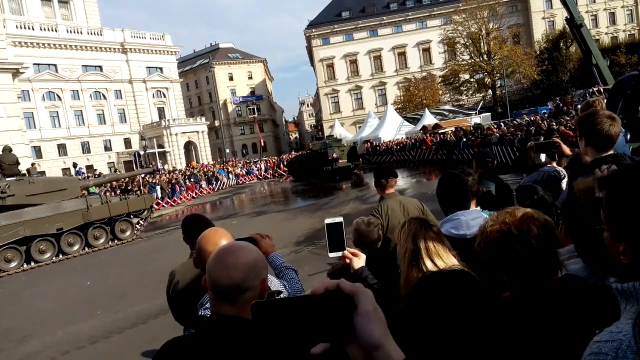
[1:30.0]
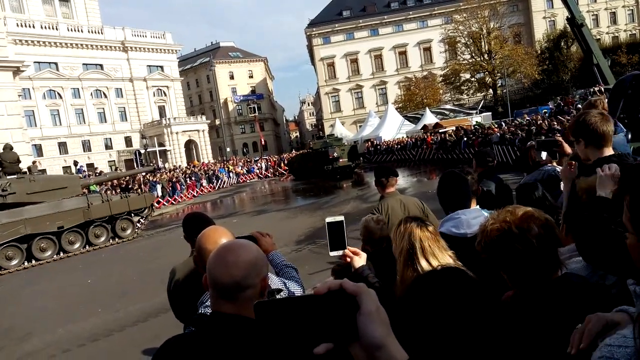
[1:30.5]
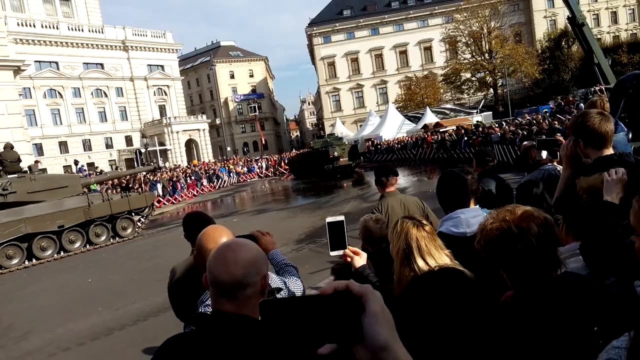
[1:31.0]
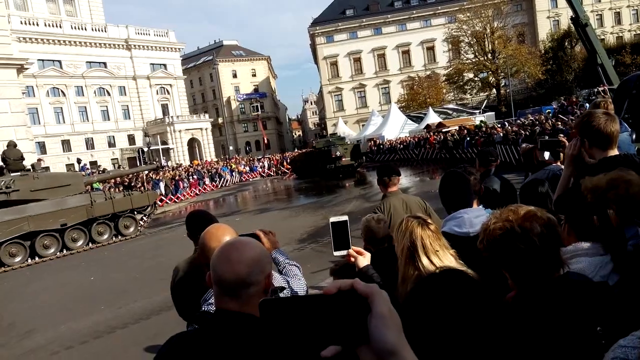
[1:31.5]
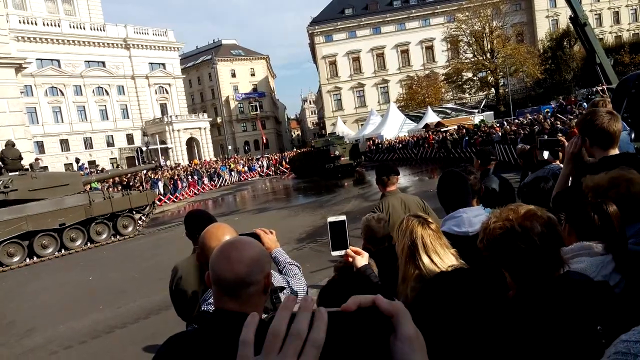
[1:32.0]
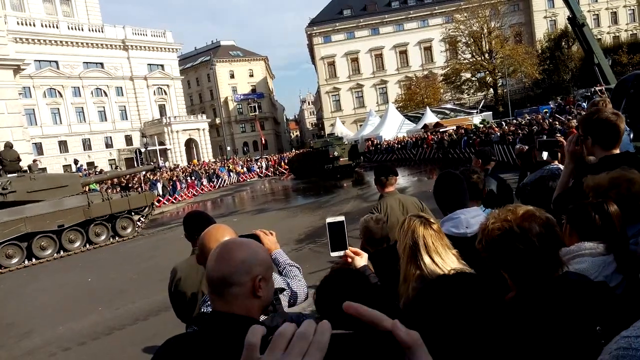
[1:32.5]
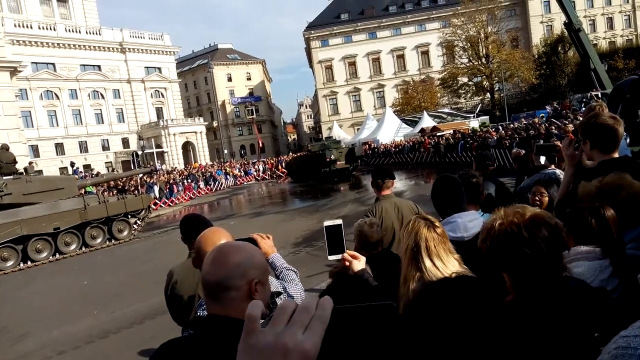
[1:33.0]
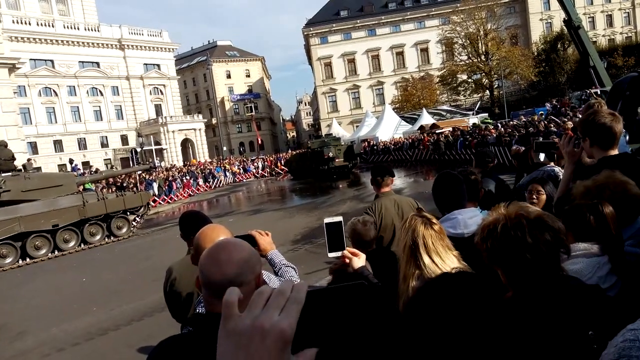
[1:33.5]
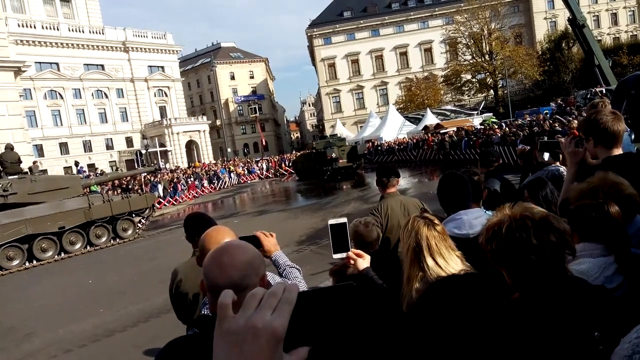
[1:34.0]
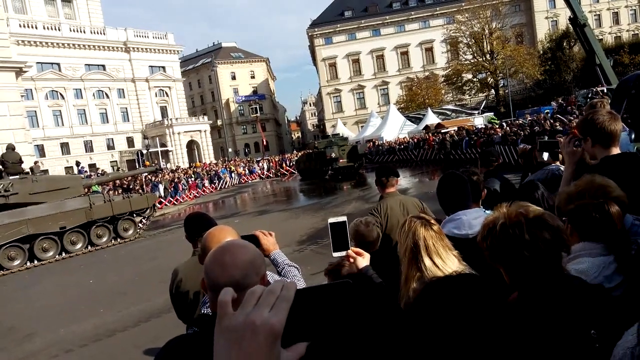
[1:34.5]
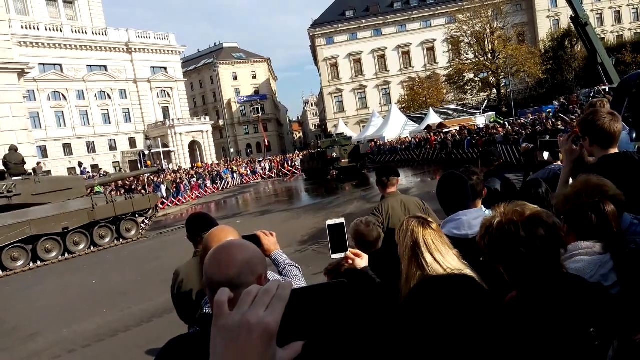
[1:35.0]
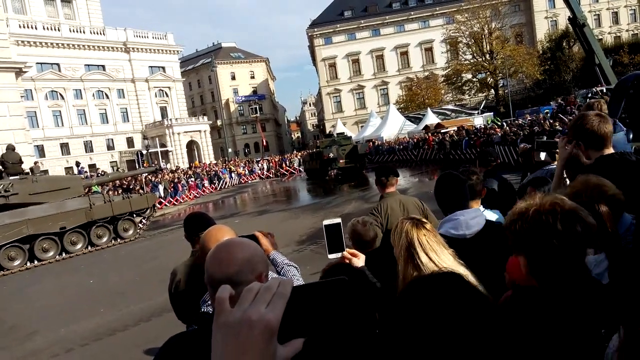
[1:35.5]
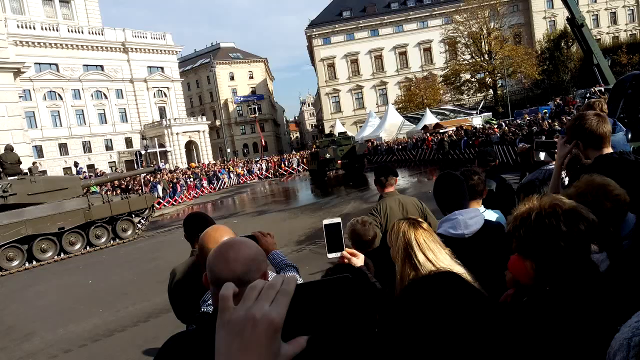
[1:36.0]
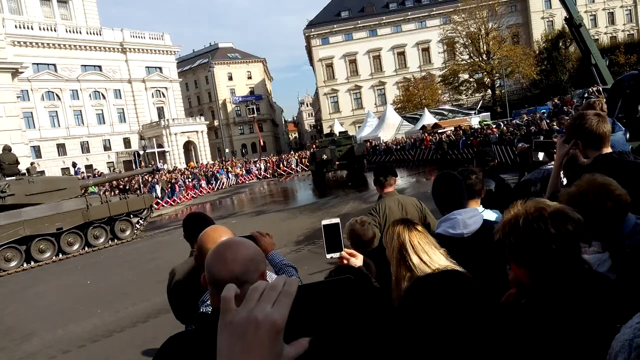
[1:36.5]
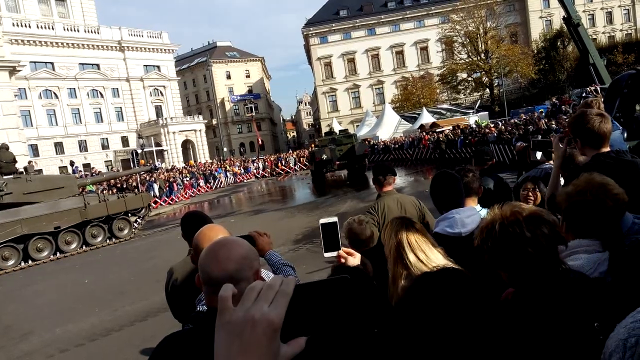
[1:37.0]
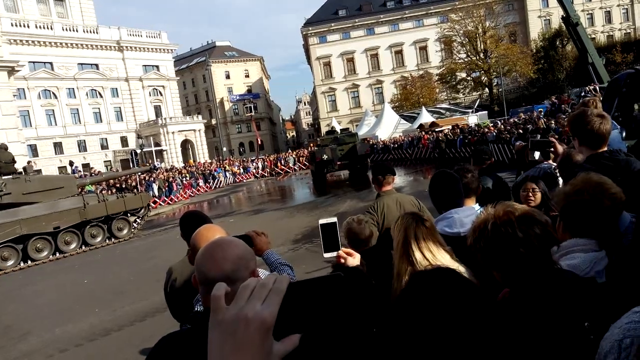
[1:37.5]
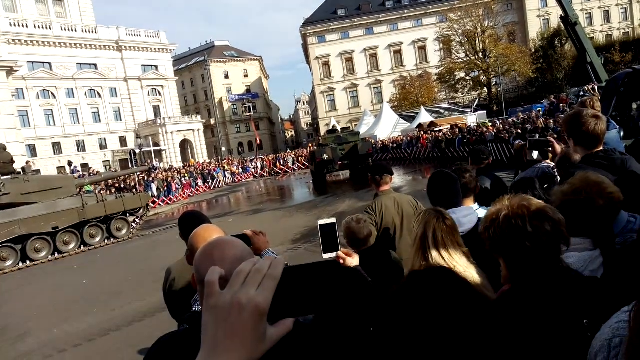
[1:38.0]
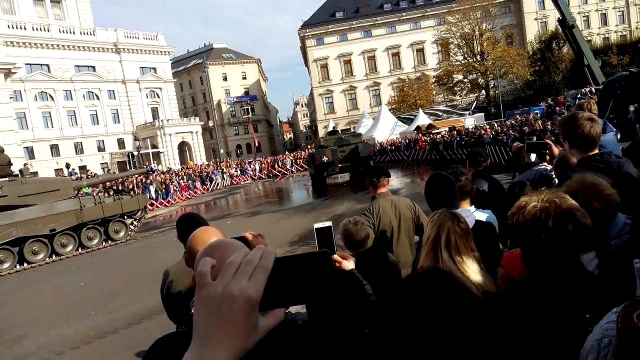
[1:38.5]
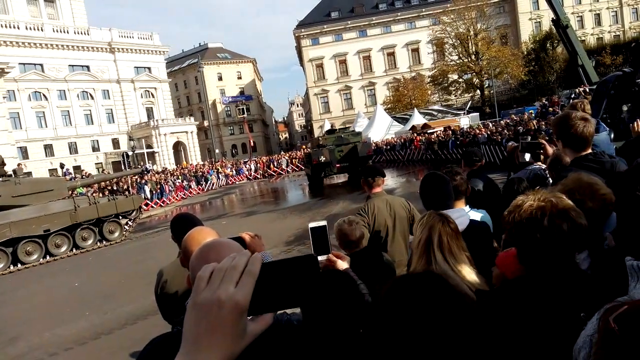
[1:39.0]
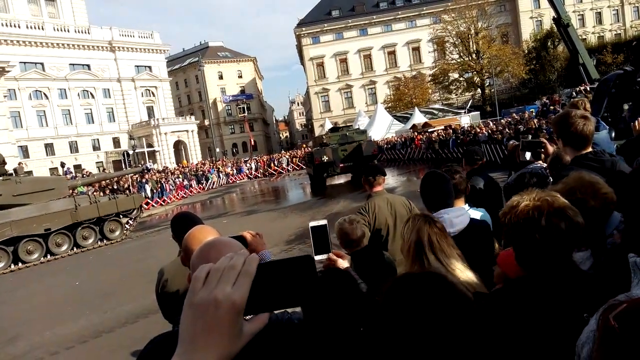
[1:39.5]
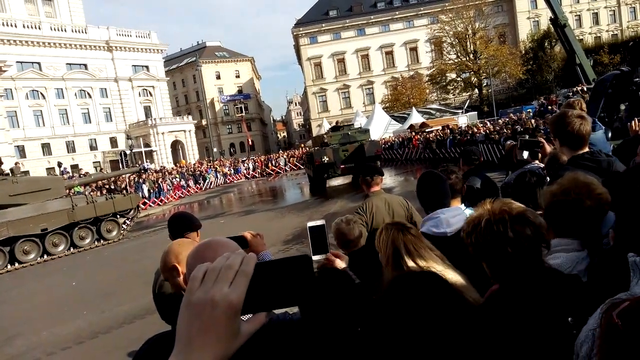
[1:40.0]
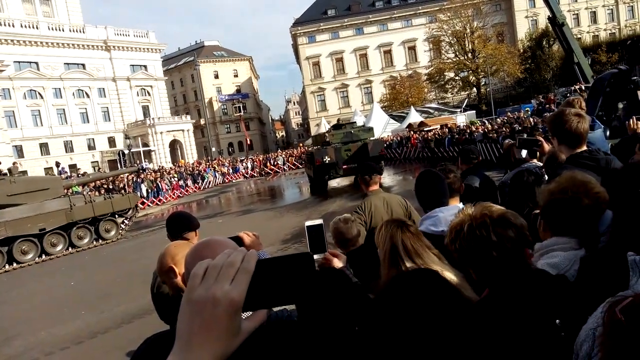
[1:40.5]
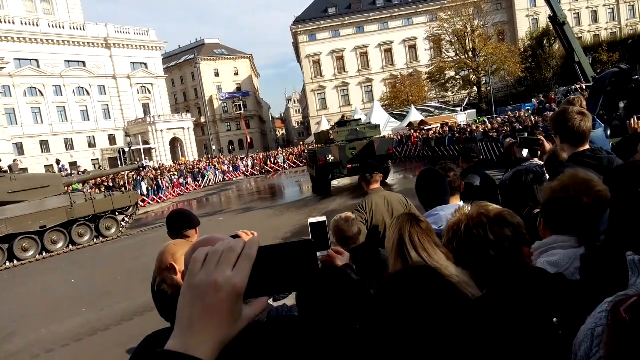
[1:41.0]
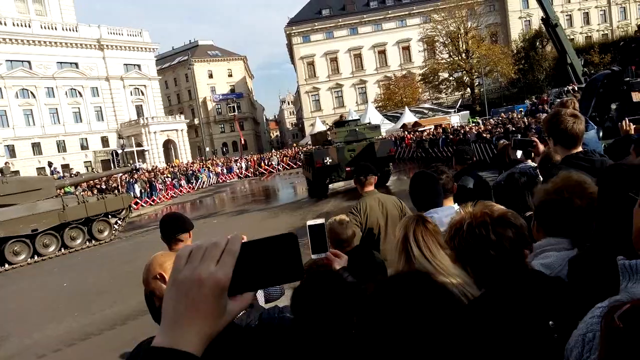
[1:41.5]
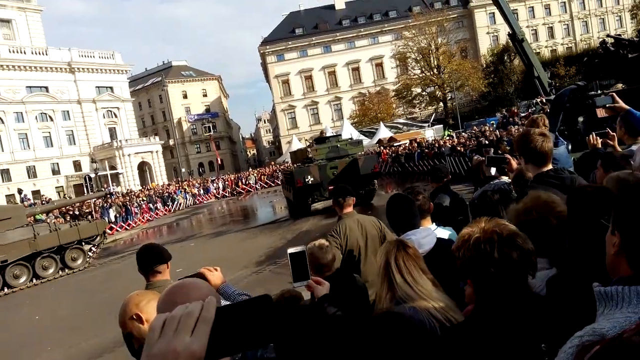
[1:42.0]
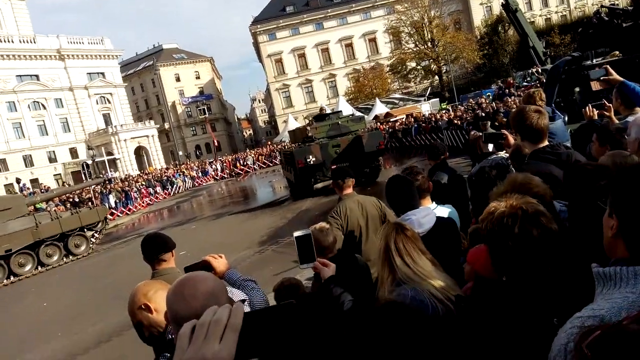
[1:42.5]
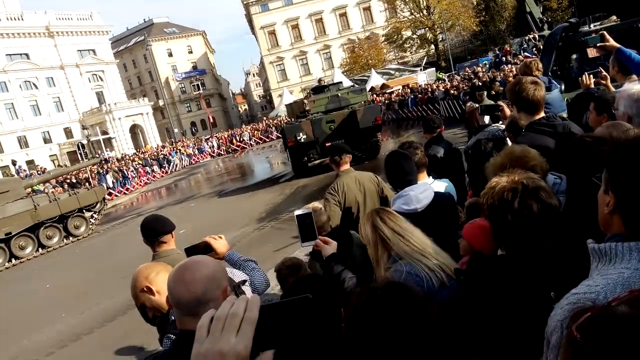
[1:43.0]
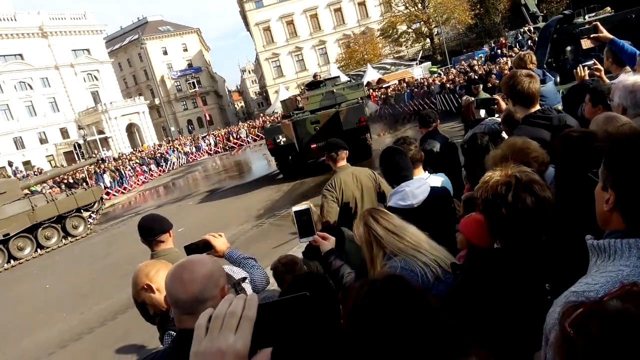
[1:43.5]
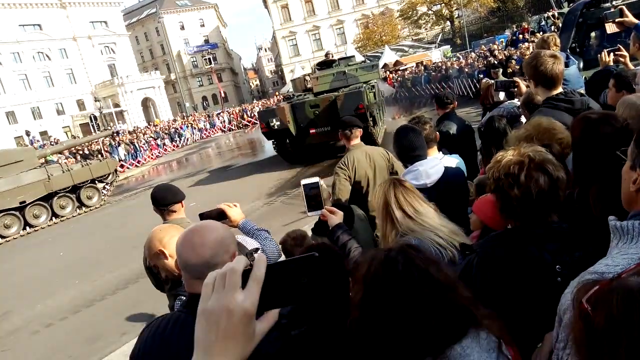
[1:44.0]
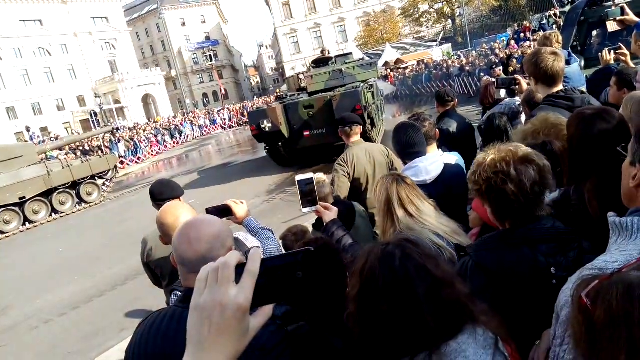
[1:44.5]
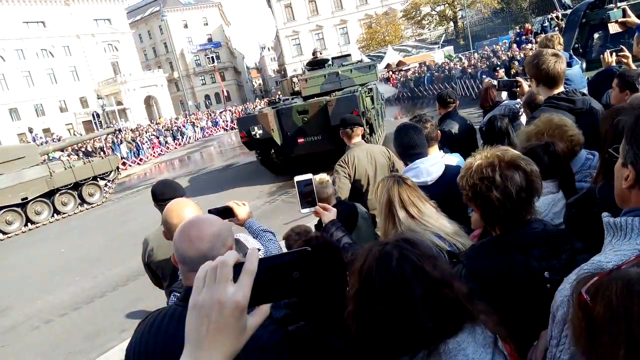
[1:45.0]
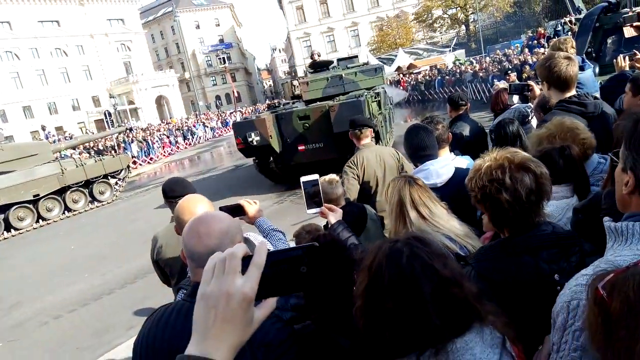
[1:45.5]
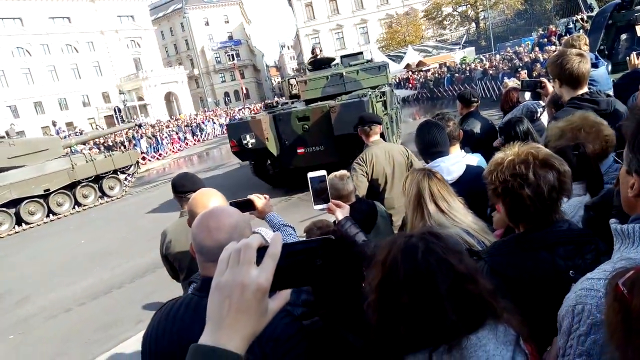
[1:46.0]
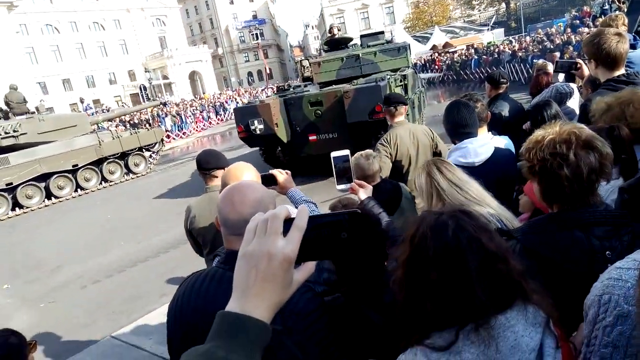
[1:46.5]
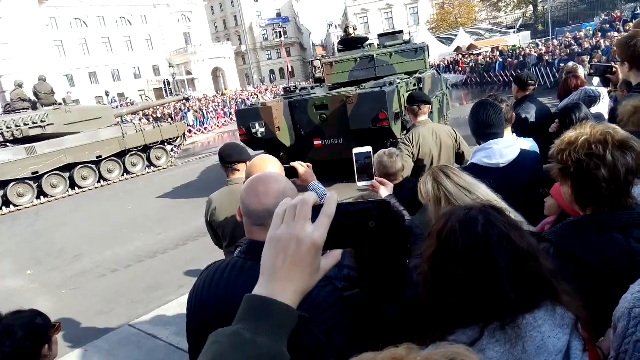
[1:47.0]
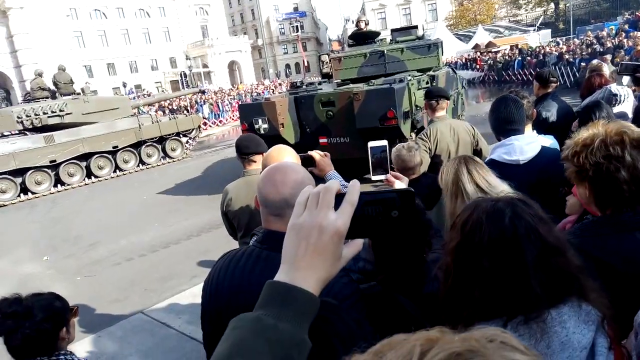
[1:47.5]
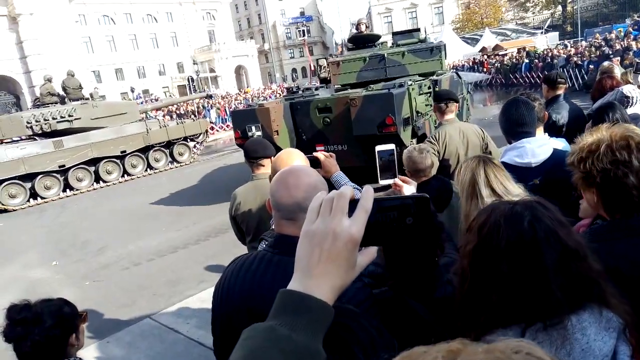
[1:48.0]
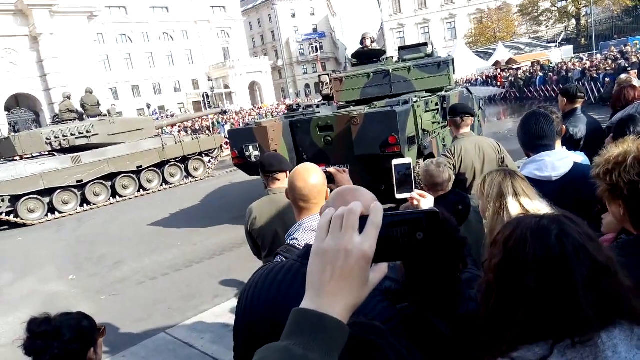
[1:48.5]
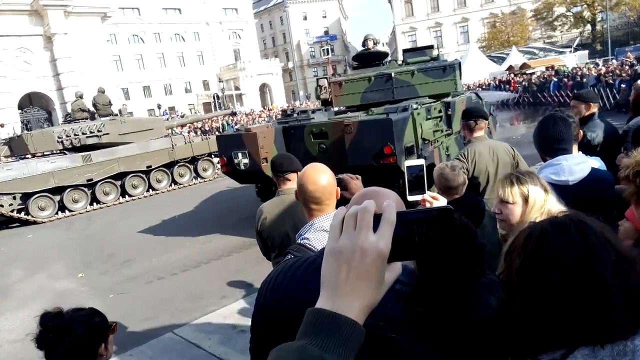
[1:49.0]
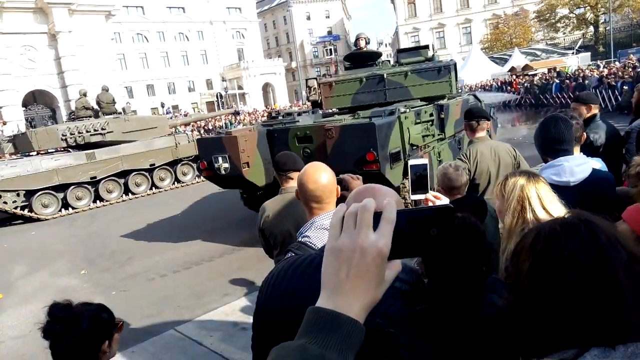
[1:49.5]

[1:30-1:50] The tank at the far end of the parade ground that has been spinning around slowly progresses forwards towards the crowd, who are using their phones to capture the occasion. It draws closer and closer until it is clearly visible. There is a white cross at the front on one of its front-facing wheel arches, on the tank's right side, which is the left side from the viewer's perspective. The tank is outwardly manned by just one person. Its base colour is khaki green, with camouflage blotches that seem to be olive green and black. As the tank gets closer, the angle changes slightly and someone in the crowd not seen before raises their left hand with a phone to film.